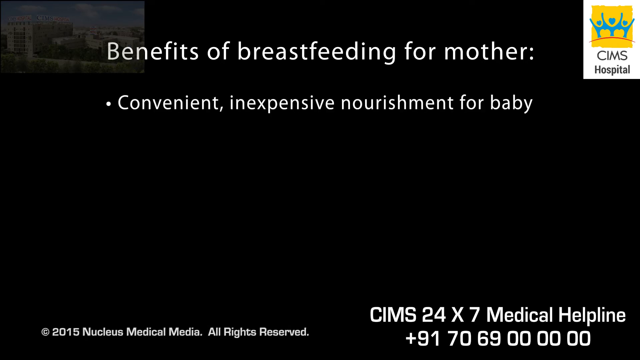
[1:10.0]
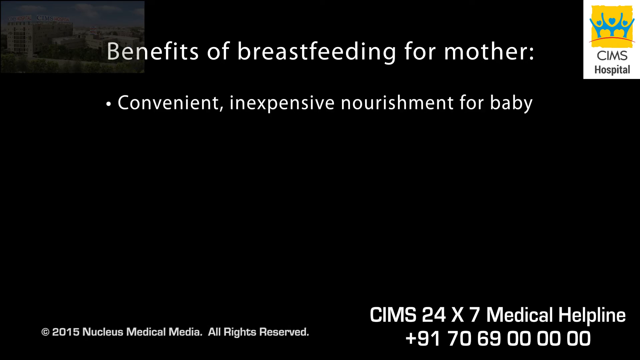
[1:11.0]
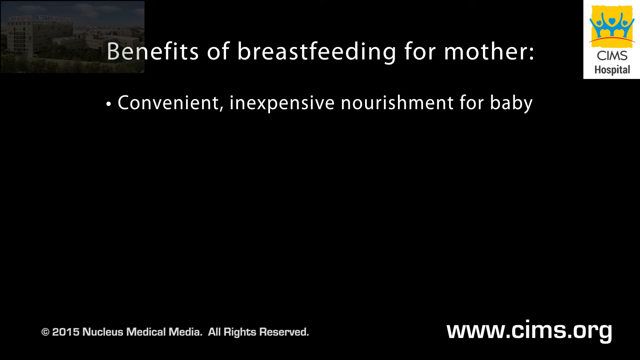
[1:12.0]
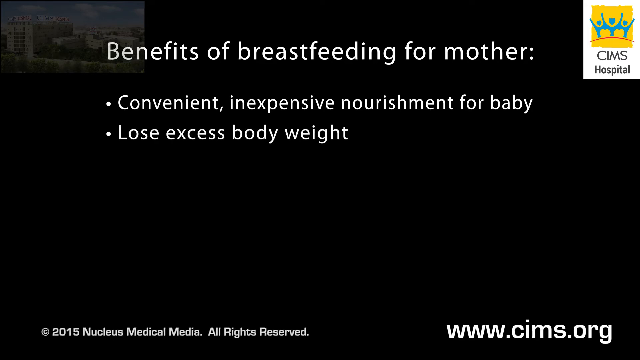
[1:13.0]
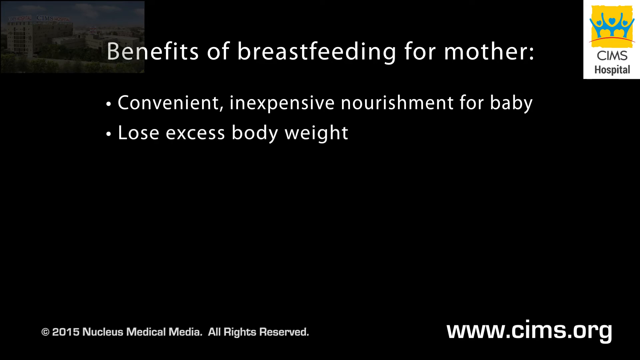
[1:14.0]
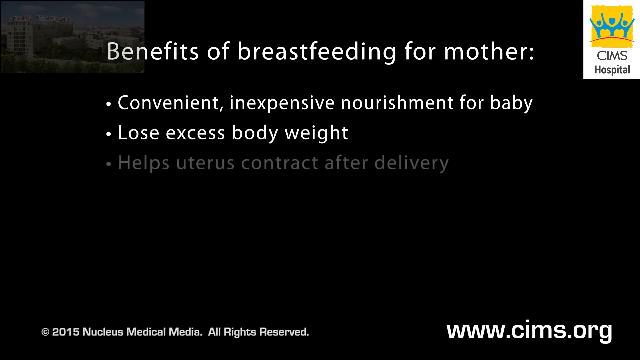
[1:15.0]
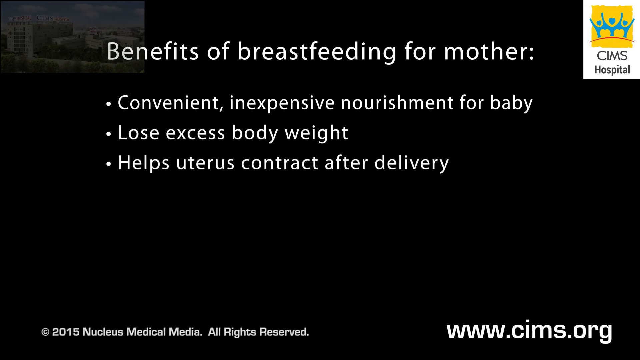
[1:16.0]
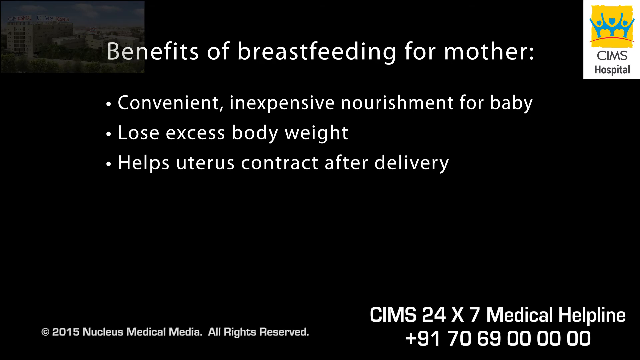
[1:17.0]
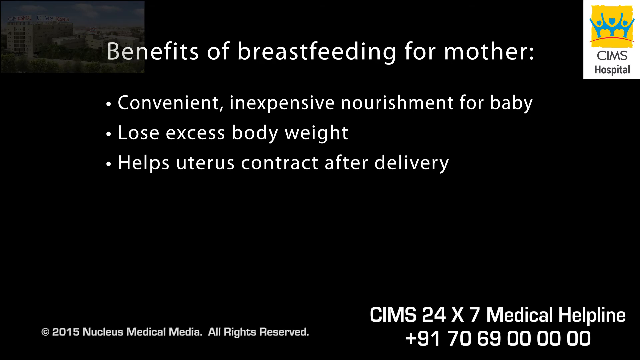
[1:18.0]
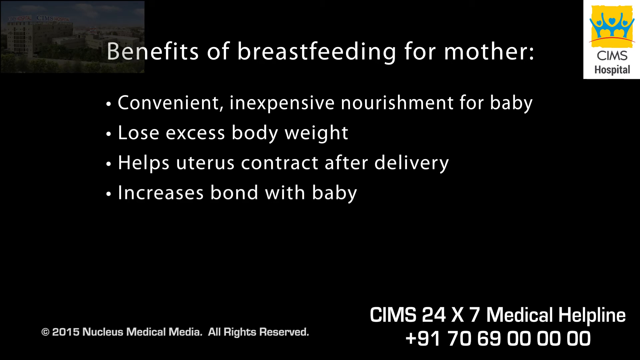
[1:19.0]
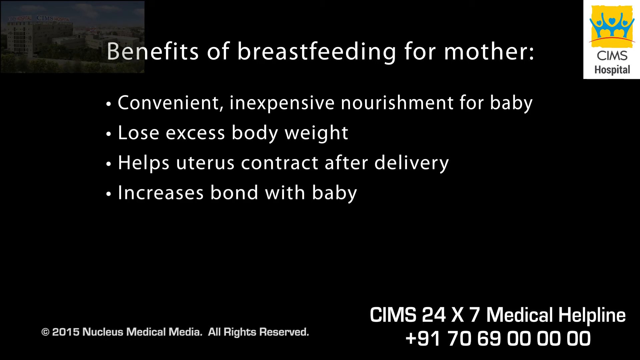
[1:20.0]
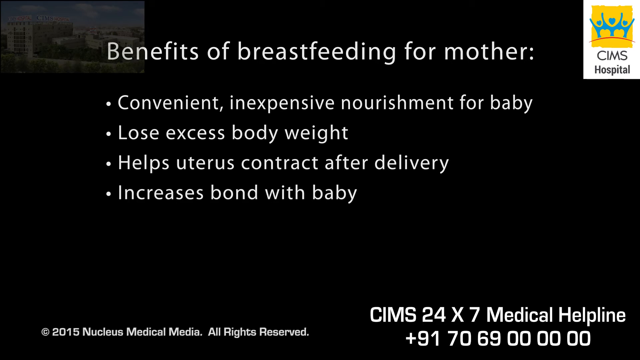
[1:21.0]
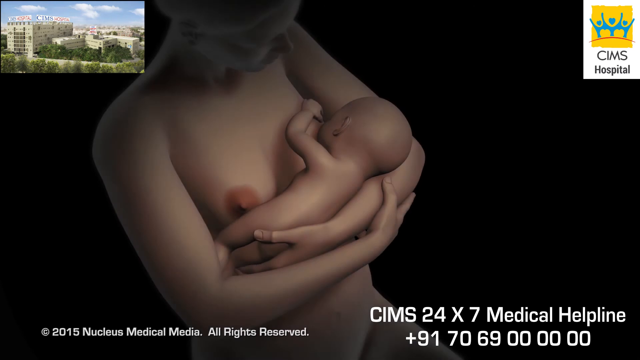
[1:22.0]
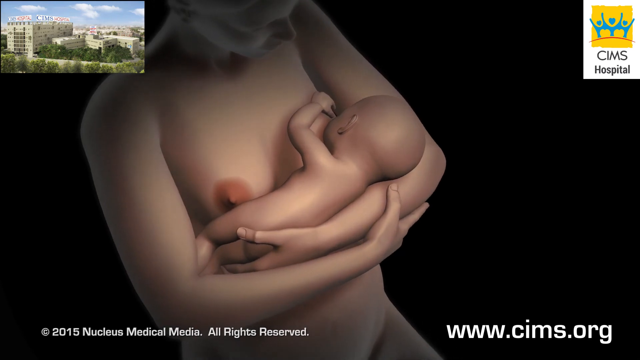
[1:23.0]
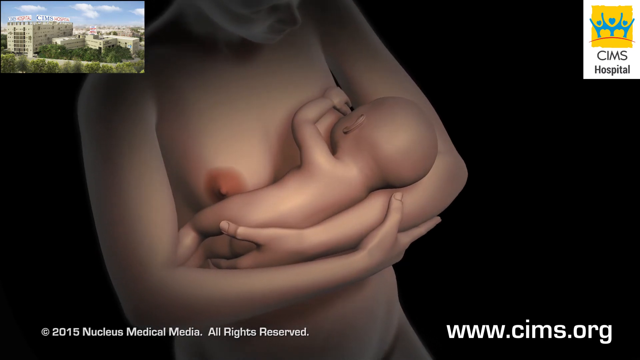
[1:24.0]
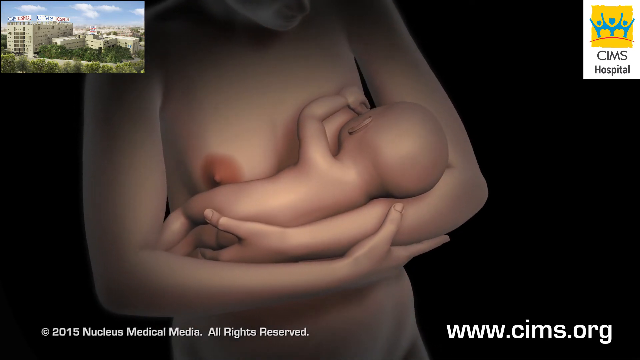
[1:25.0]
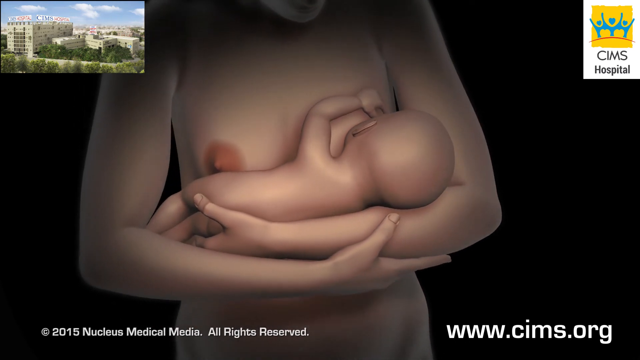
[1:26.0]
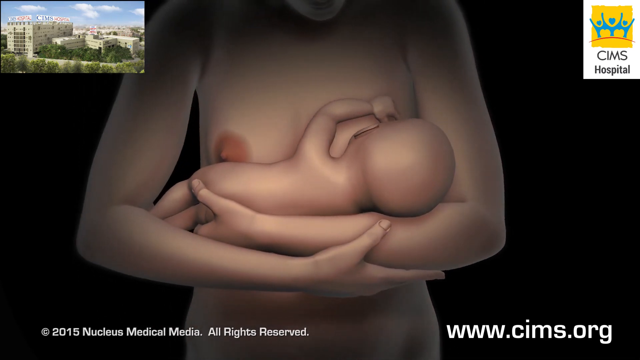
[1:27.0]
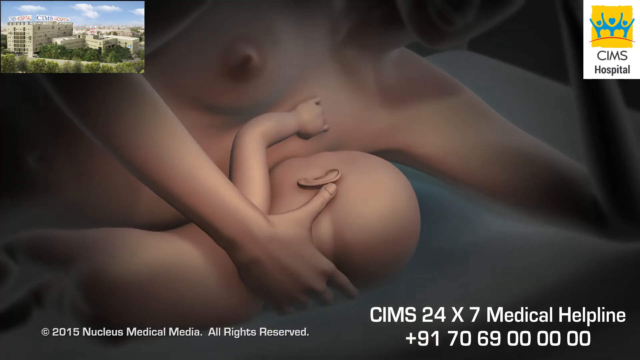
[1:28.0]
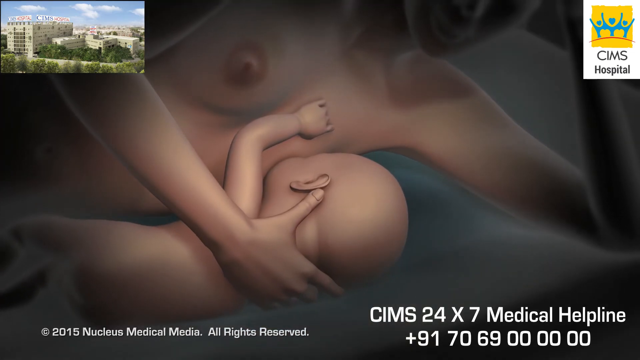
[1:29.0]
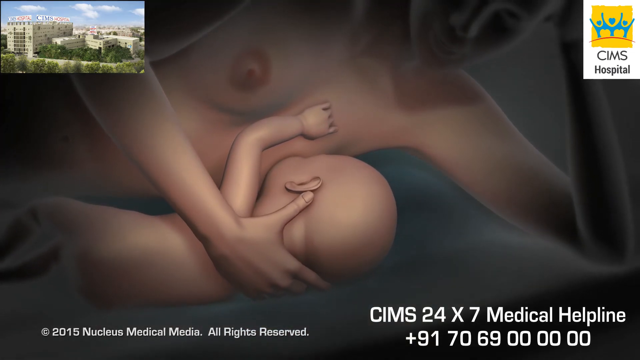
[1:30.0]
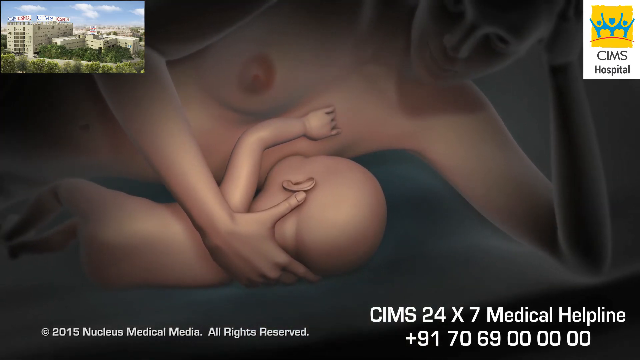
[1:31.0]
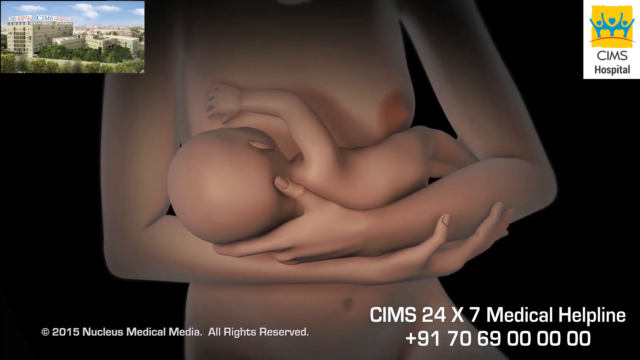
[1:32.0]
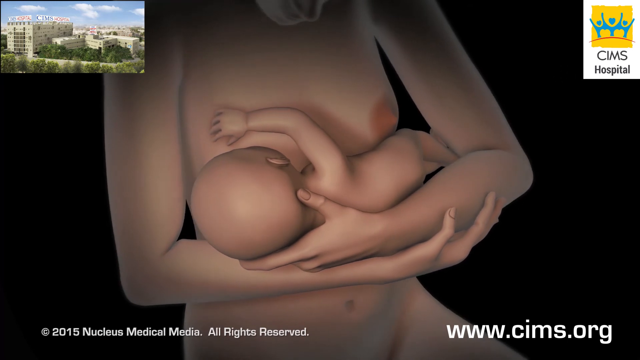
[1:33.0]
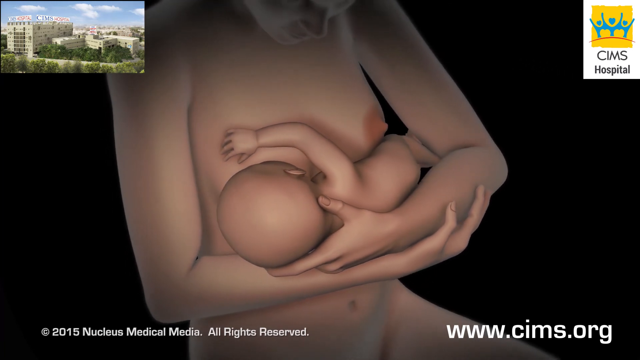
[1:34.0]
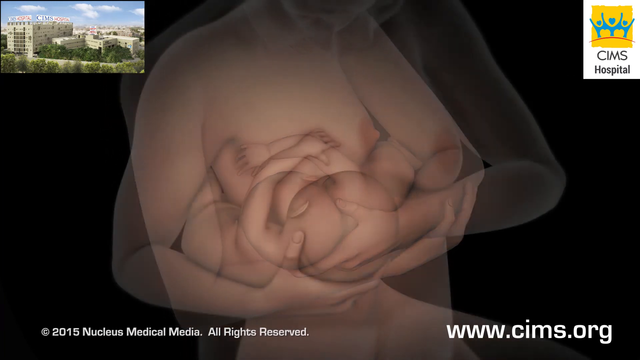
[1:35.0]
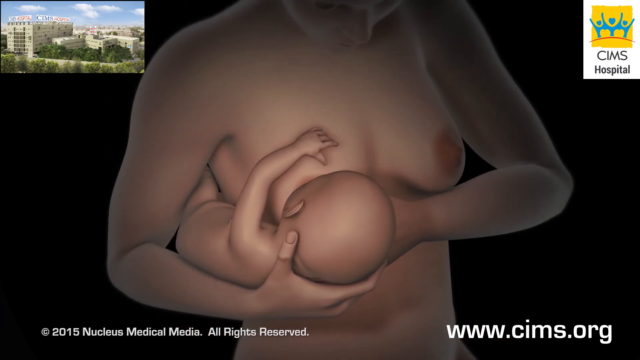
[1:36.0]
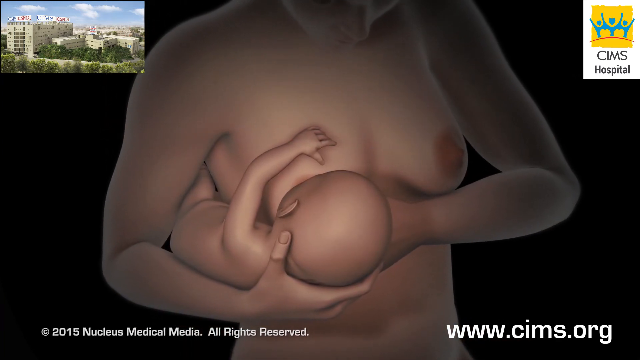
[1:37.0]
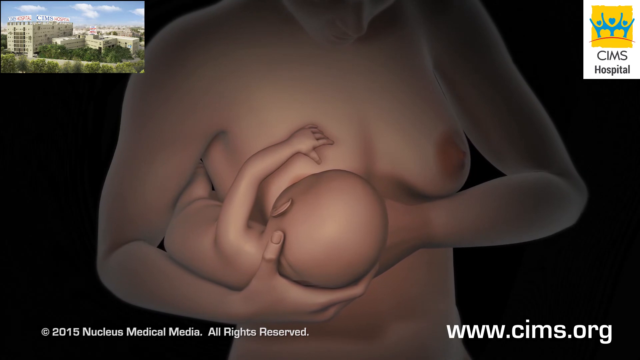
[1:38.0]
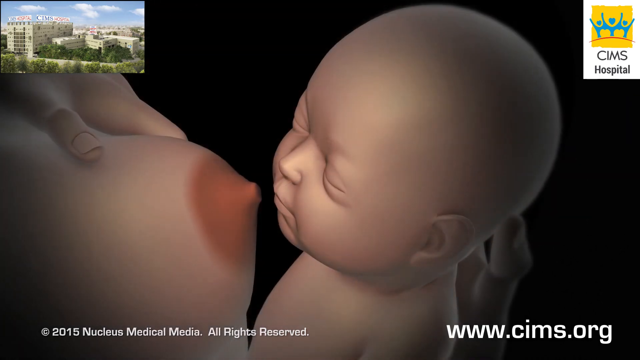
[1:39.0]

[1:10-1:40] The video presents benefits of breastfeeding for the mother: convenience with no bottle of formula to prepare, lower cost than buying formula, better nourishment than factory-made formula, help losing the weight gained during pregnancy, a uterus that contracts better and faster, and an intimate bonding moment with the baby.